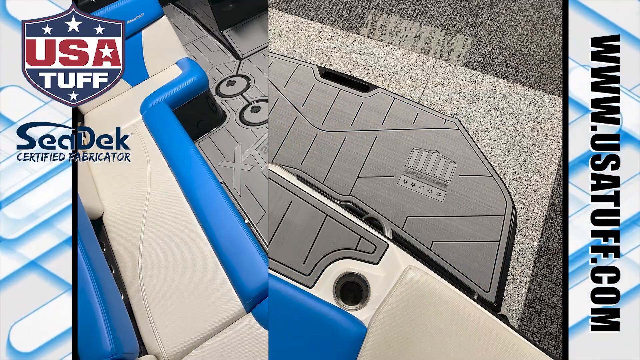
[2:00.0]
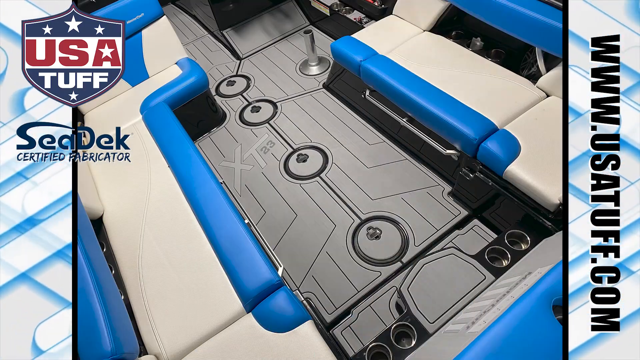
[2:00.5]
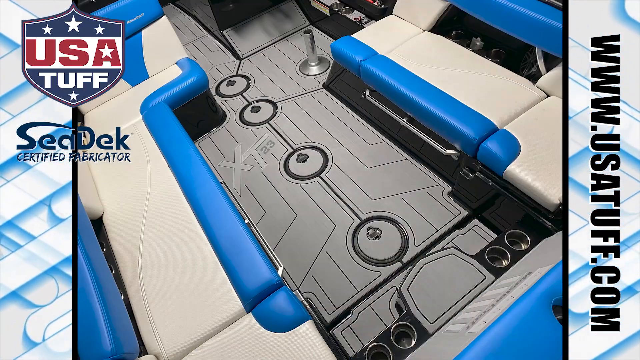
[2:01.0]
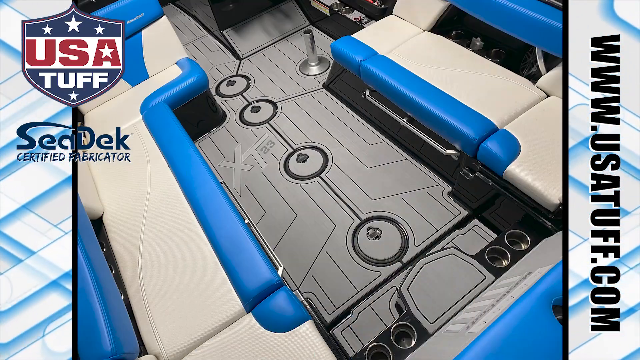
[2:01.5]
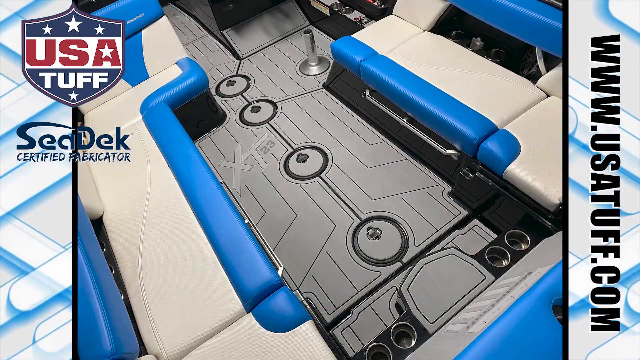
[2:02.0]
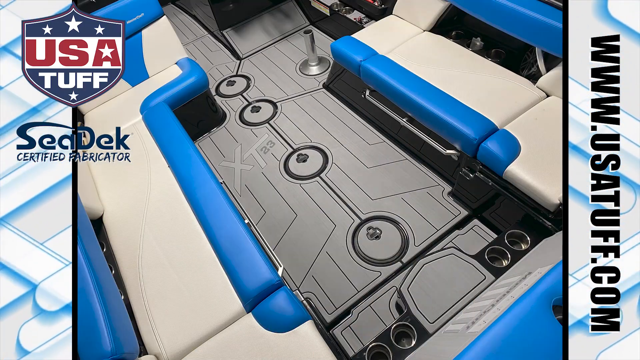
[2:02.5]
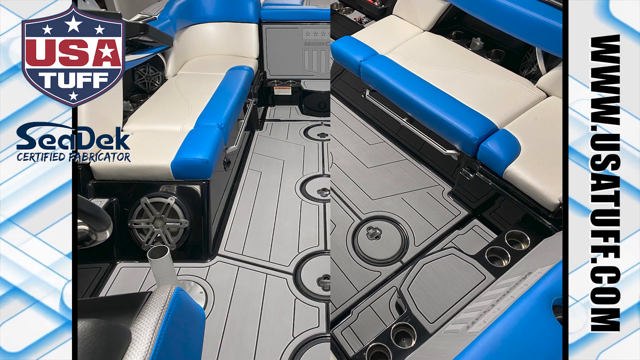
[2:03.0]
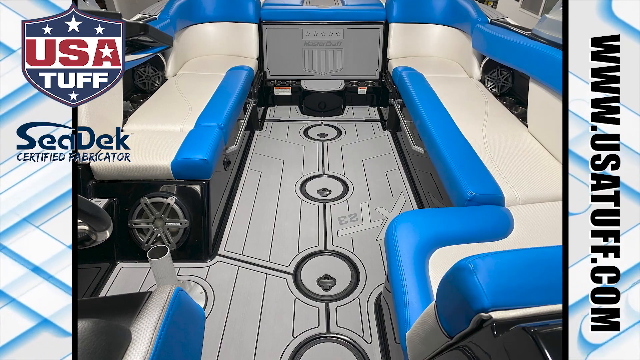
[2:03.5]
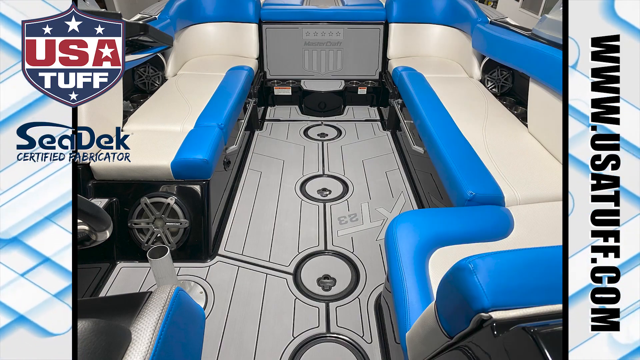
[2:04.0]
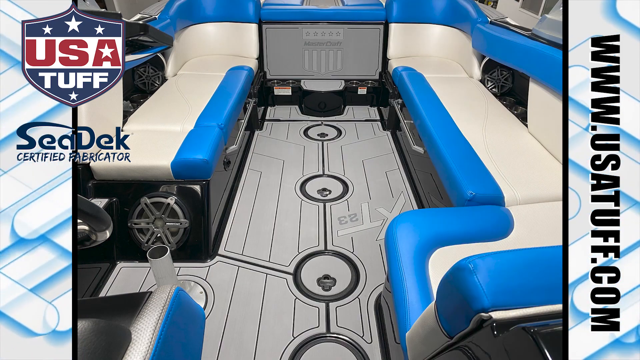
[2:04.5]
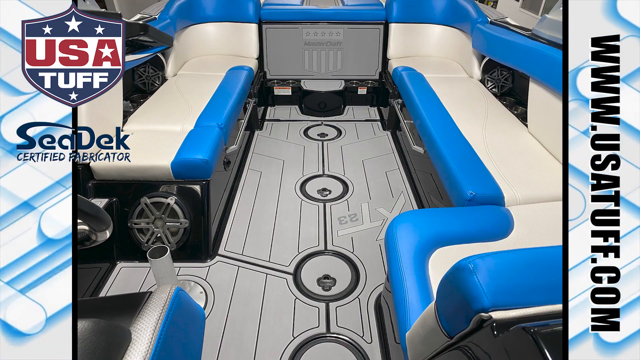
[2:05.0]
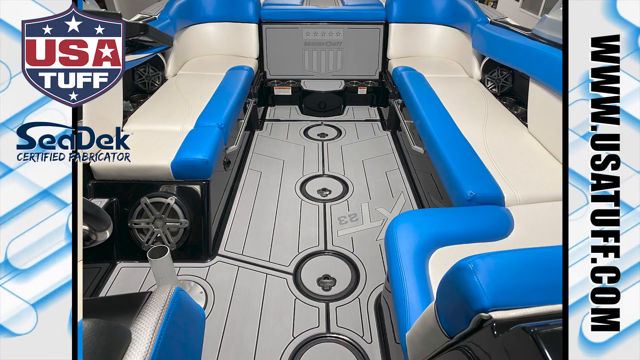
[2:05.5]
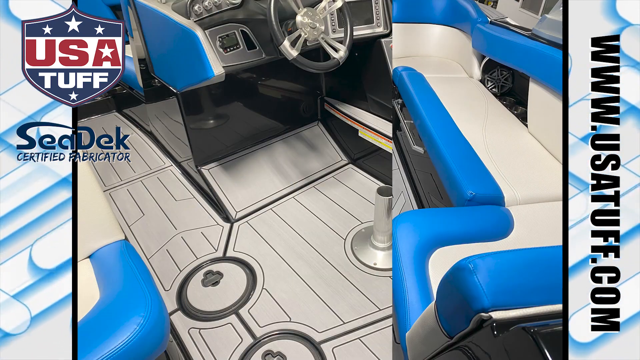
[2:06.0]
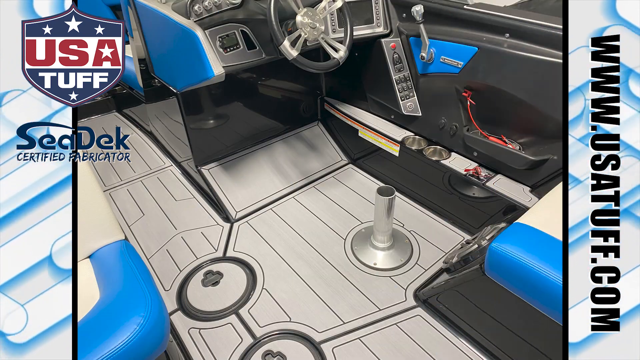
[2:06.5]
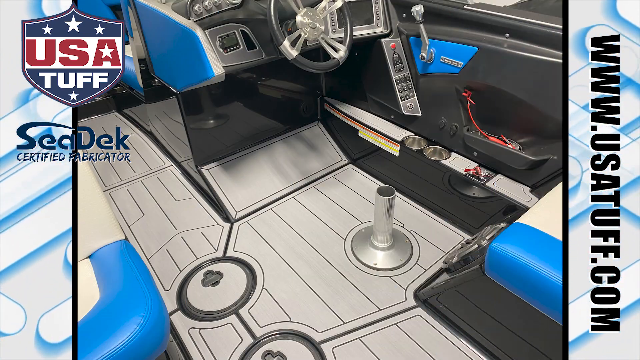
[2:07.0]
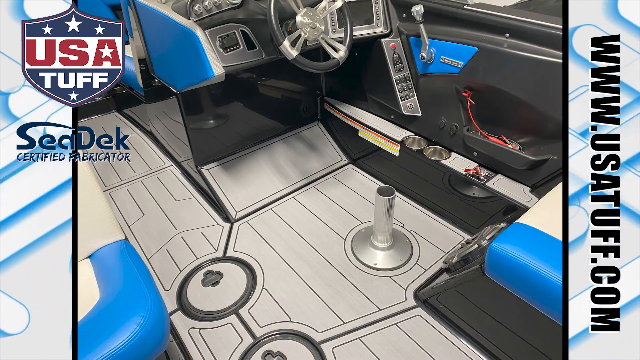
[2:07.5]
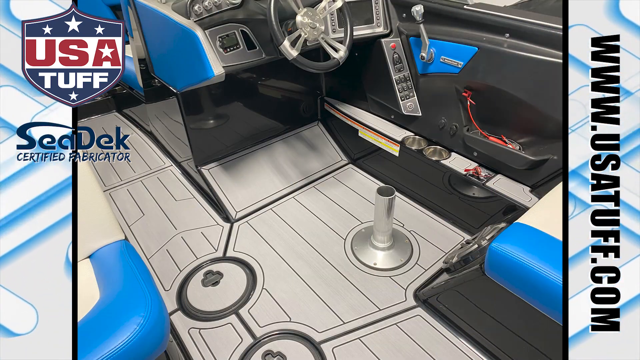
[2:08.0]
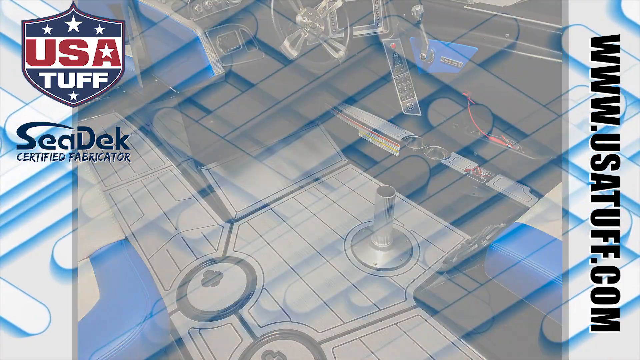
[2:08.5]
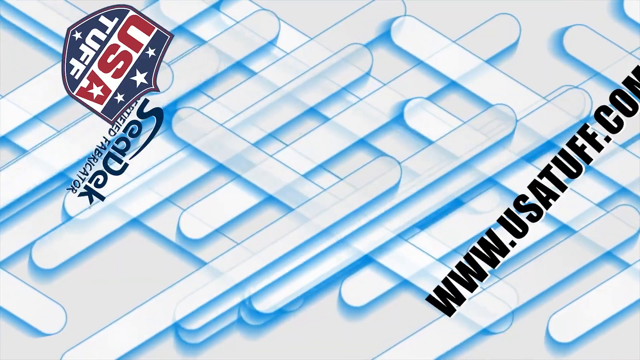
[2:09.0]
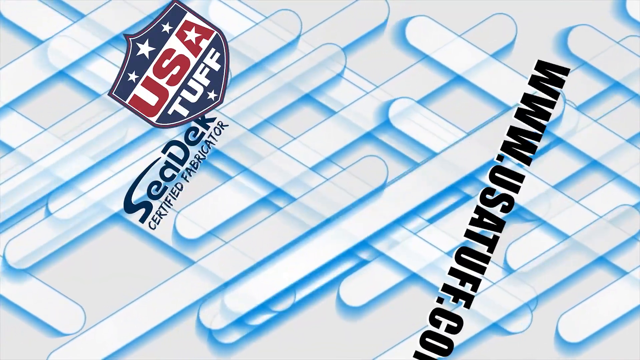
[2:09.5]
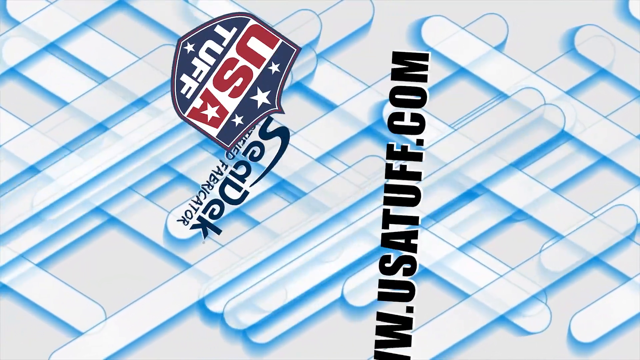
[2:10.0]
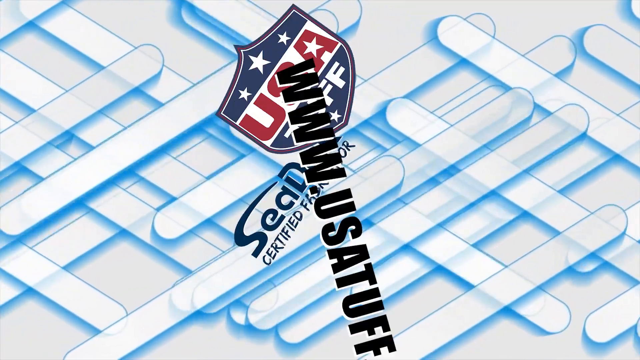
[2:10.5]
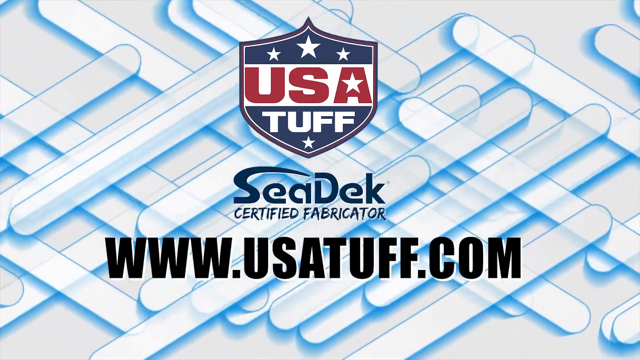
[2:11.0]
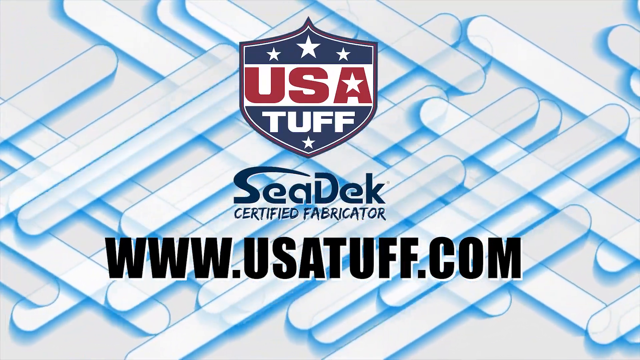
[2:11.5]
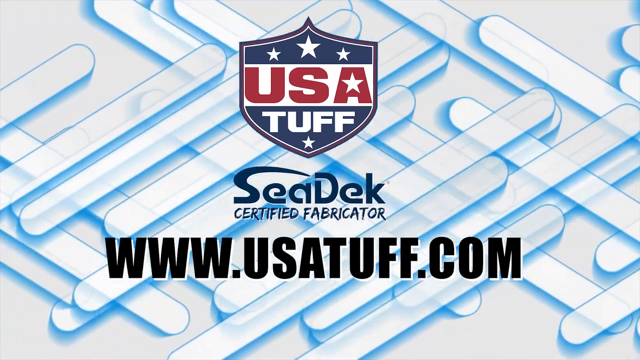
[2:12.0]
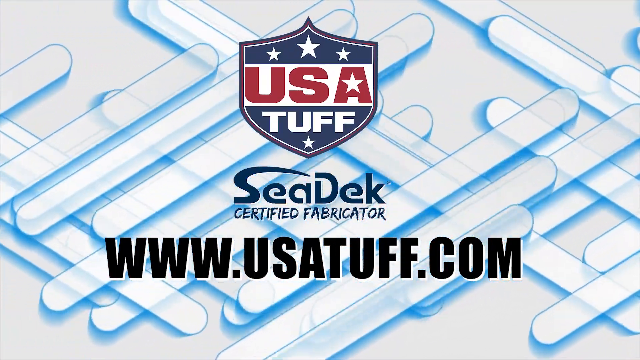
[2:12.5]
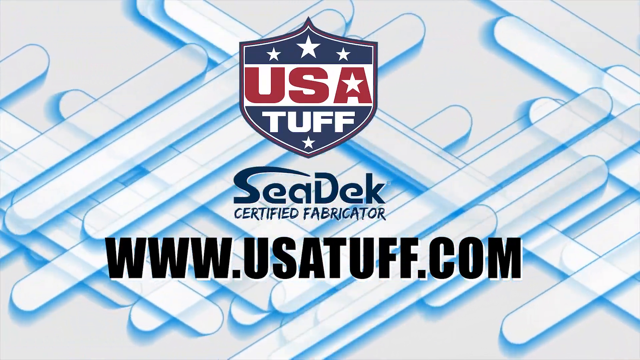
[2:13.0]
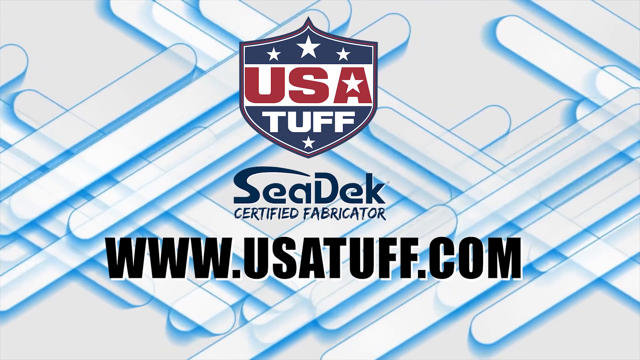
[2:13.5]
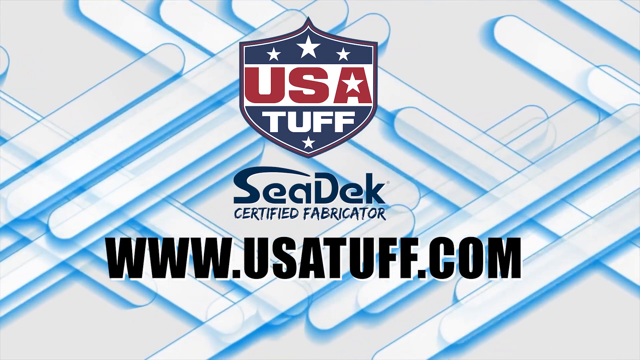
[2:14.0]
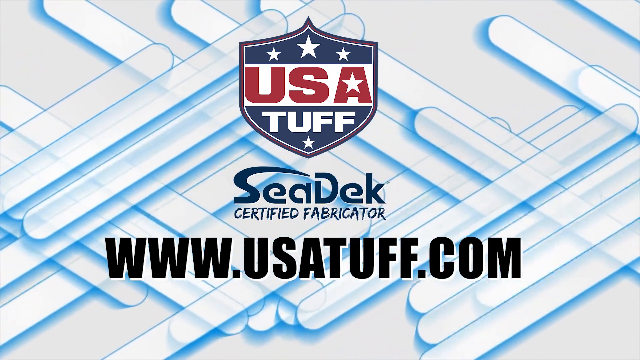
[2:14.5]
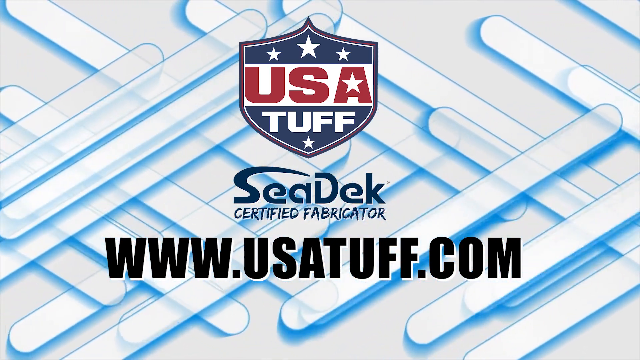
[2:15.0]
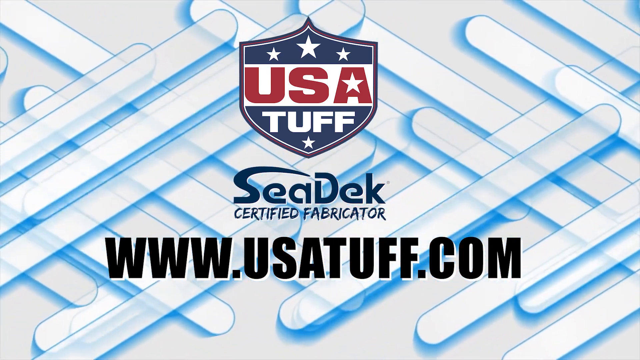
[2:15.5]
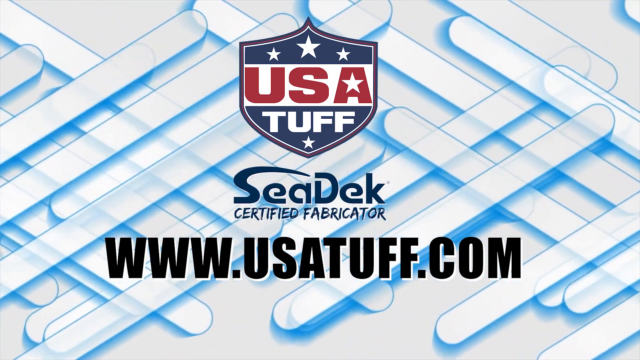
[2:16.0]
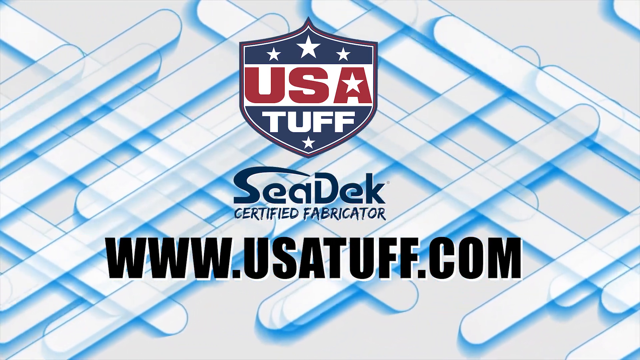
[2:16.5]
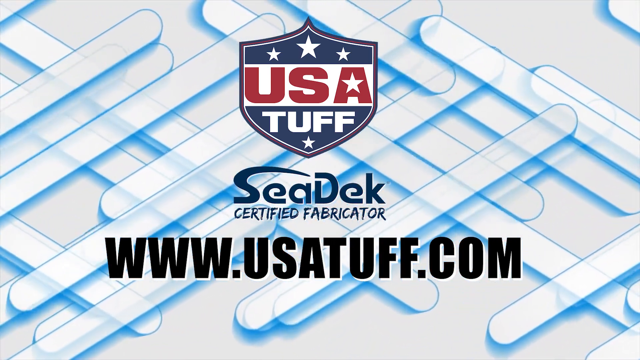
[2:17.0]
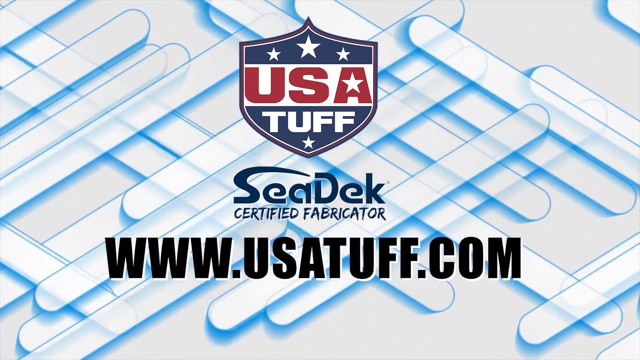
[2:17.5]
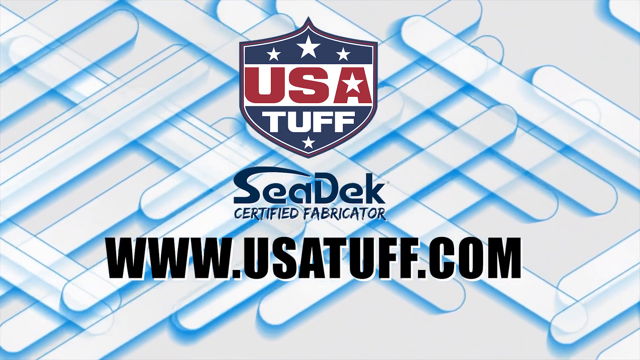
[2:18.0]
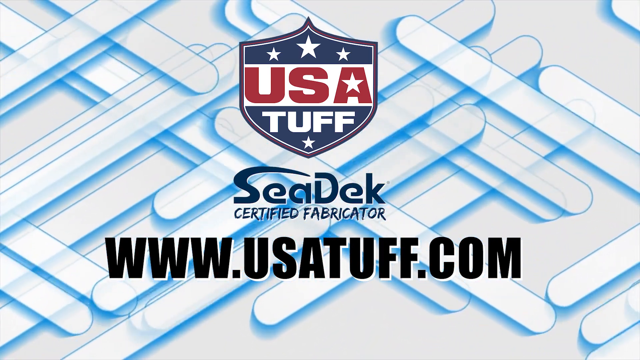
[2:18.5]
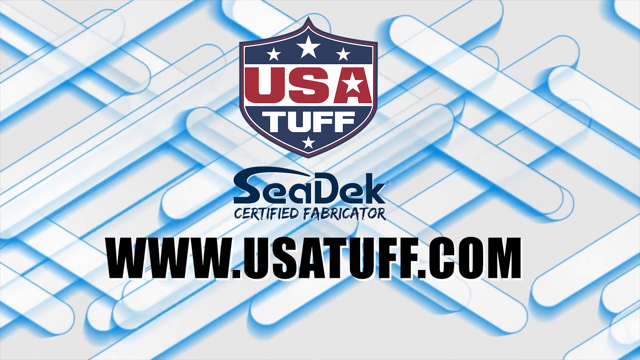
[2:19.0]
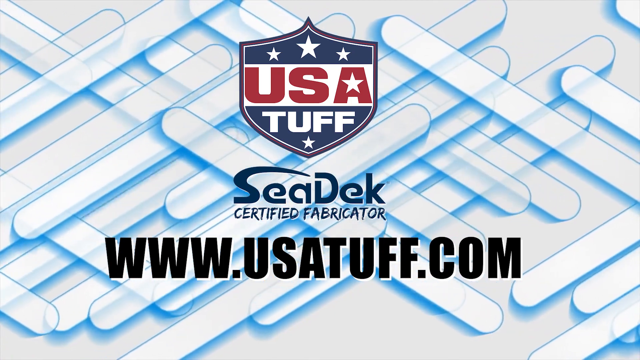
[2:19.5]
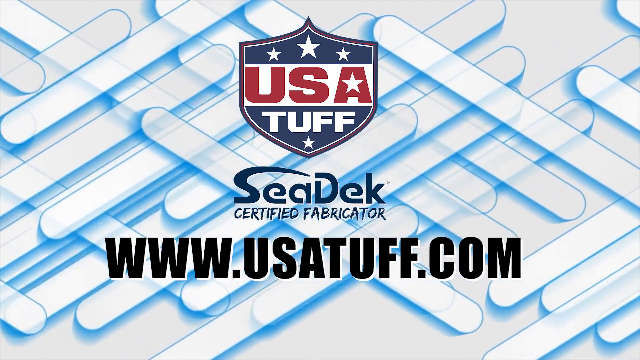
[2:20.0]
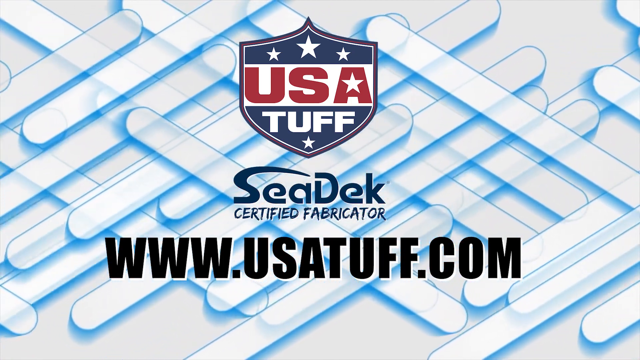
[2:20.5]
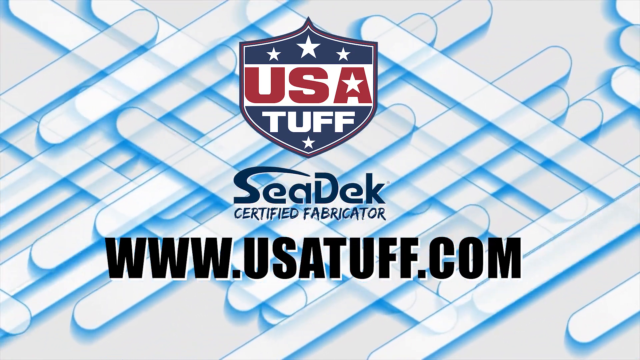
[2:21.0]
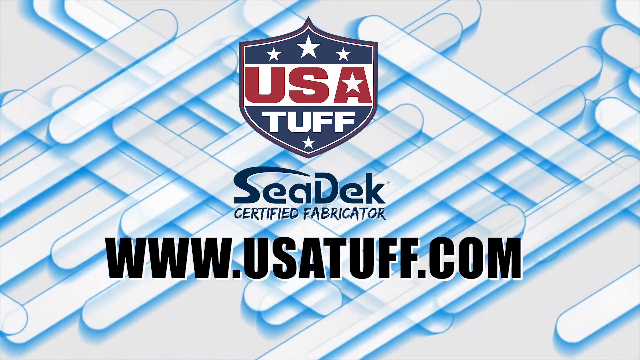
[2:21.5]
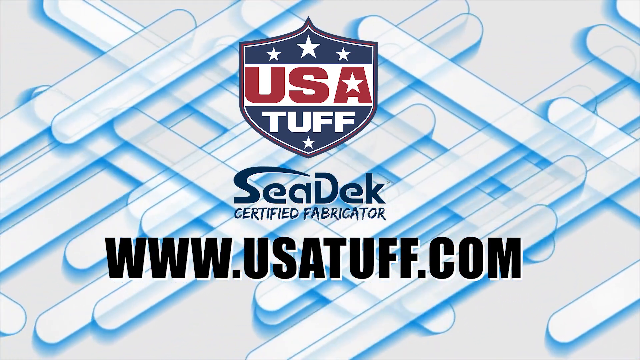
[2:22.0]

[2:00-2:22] The small transparent white box is no longer there, at least at the start. From right to left, "www.usatuff.com" is written vertically in black, then there is the emblem, blue at the top and bottom, with white stars at the top and one white star at the bottom, "USA" in red with a small star on the A, and "TUFF" in white, followed by "CDEK" and "certified fabricator". Similar images of the boat are shown as still shots rather than video, without the arrow. Then the logo, "CDEK certified fabricator" and the website spin until they reach the middle and line up in order.